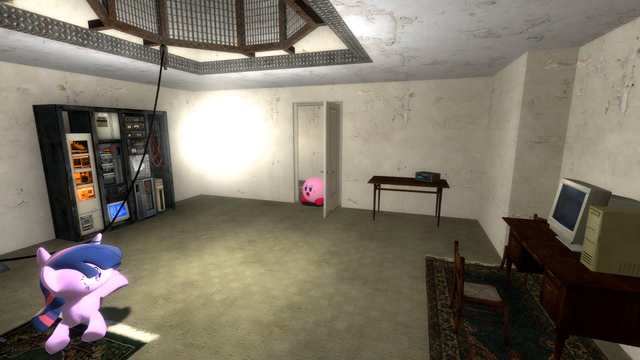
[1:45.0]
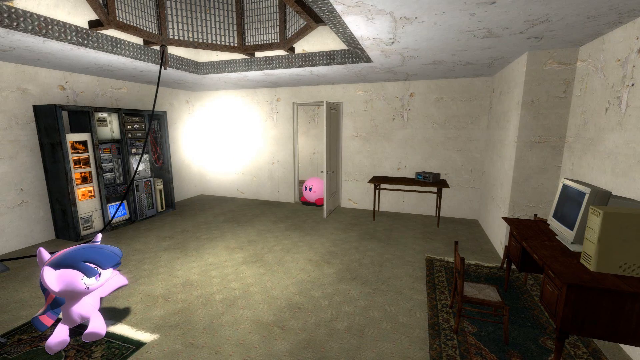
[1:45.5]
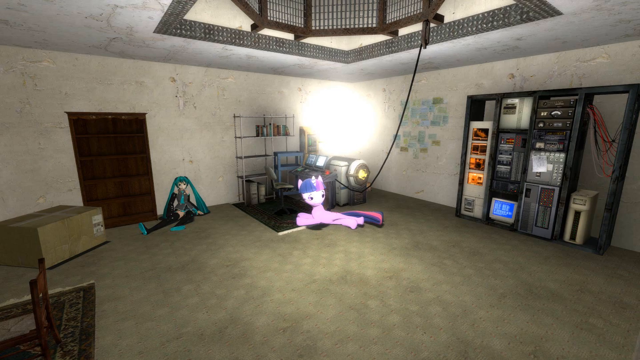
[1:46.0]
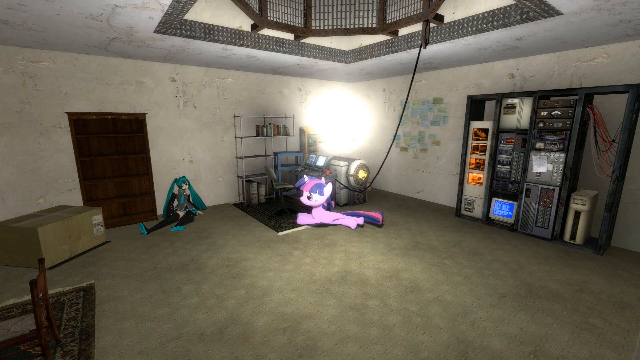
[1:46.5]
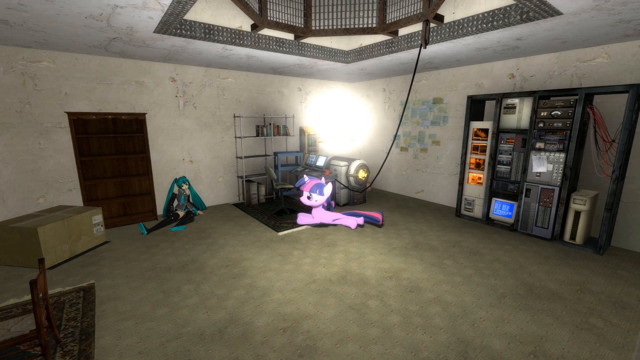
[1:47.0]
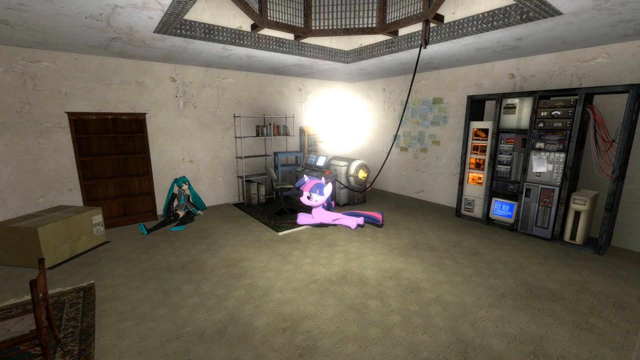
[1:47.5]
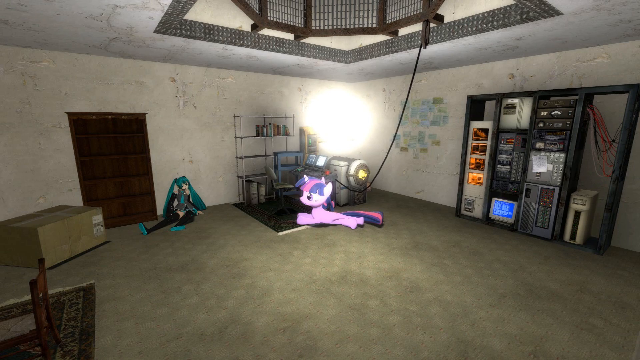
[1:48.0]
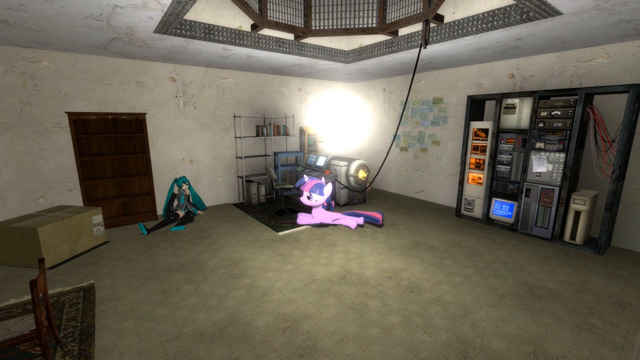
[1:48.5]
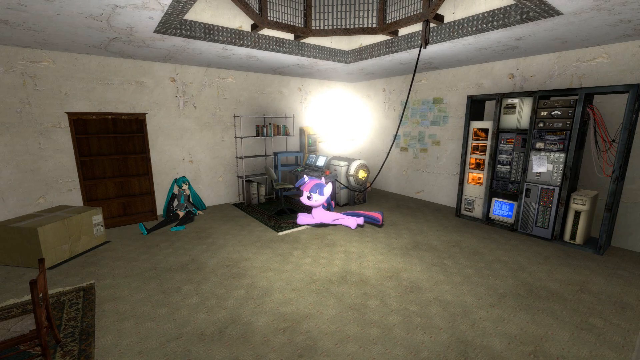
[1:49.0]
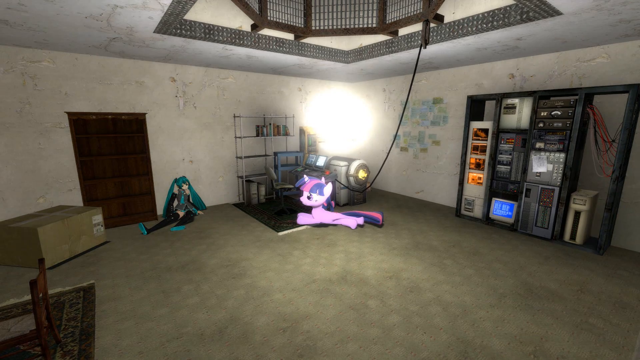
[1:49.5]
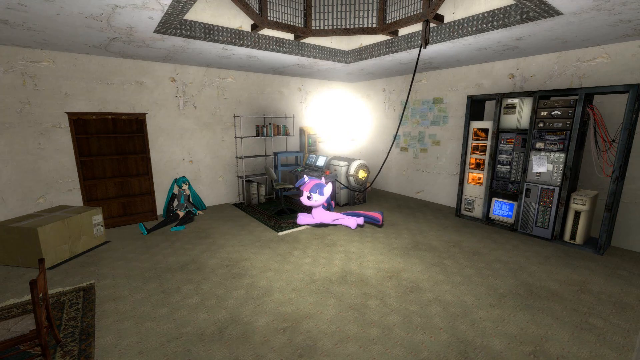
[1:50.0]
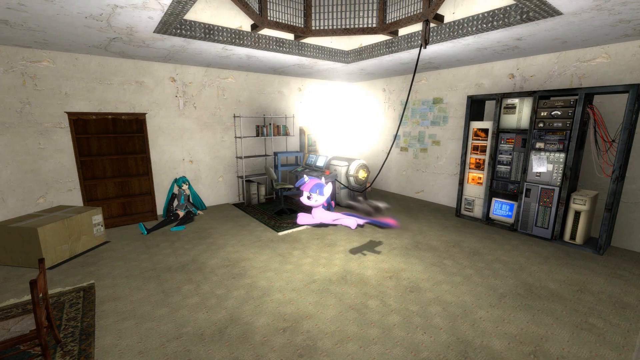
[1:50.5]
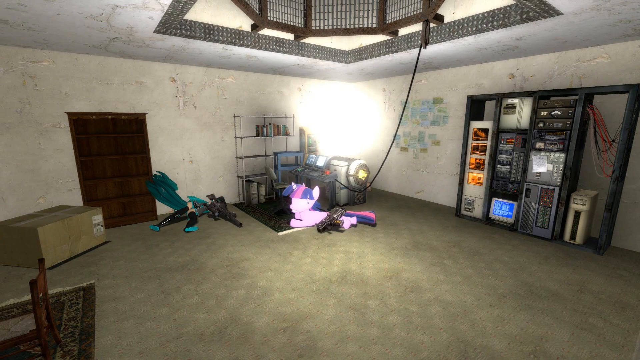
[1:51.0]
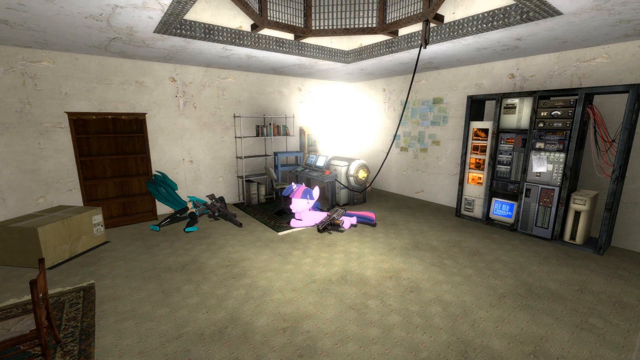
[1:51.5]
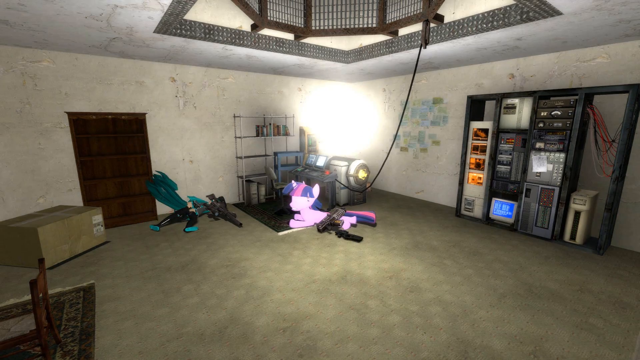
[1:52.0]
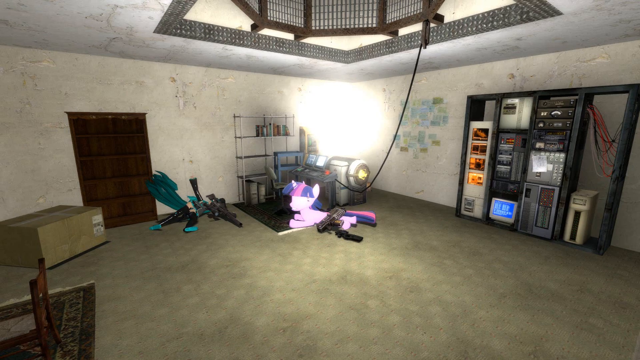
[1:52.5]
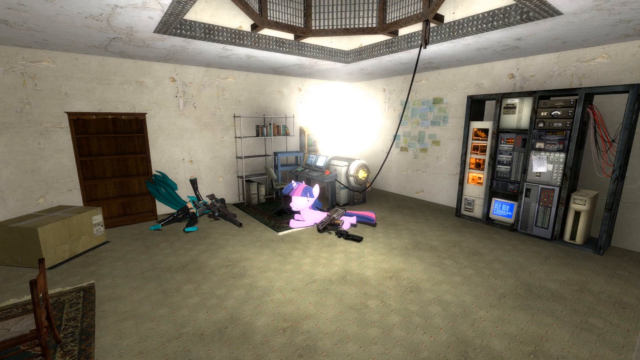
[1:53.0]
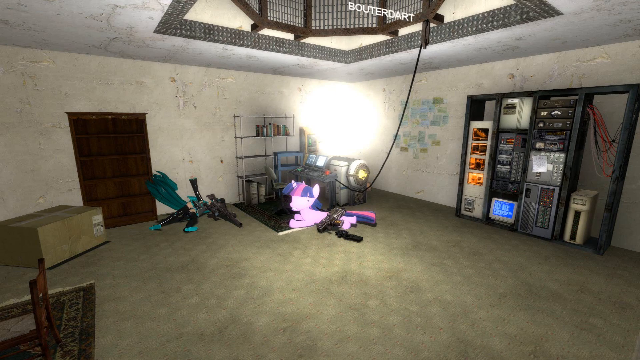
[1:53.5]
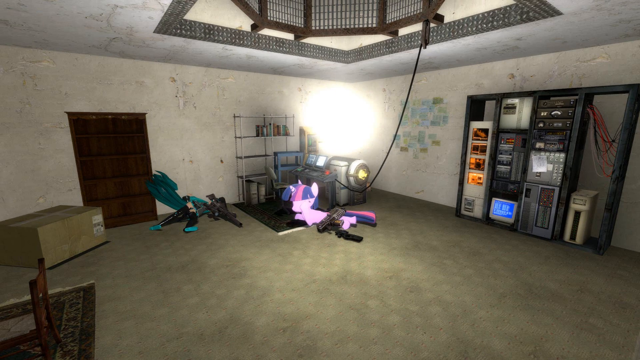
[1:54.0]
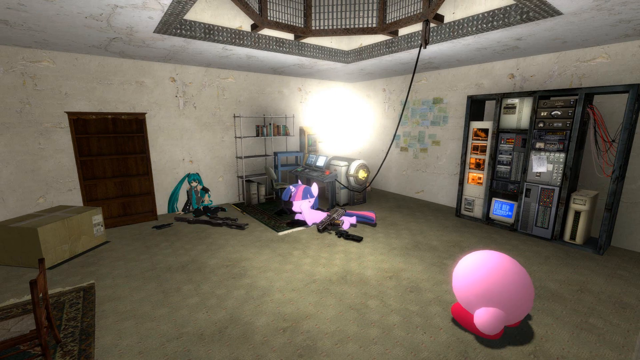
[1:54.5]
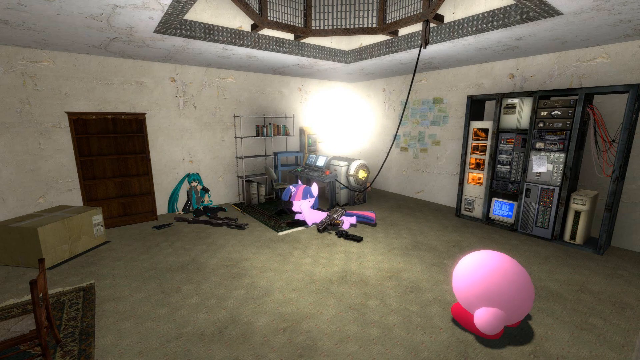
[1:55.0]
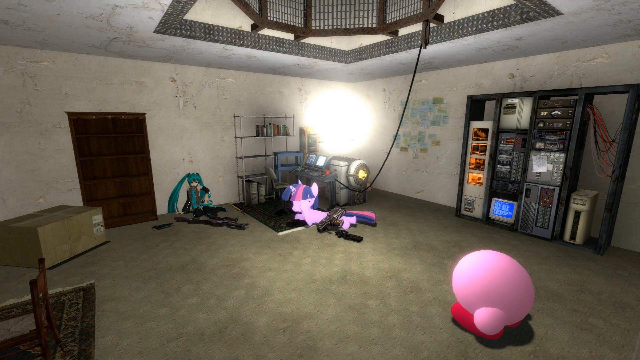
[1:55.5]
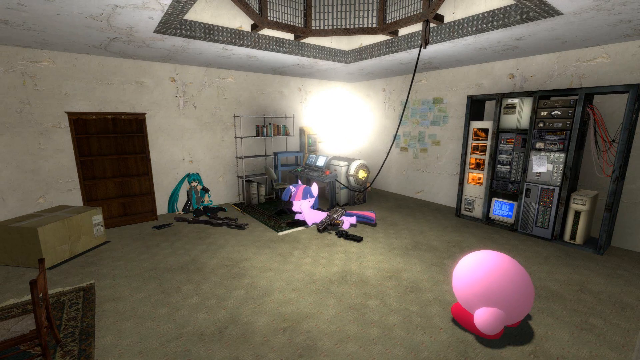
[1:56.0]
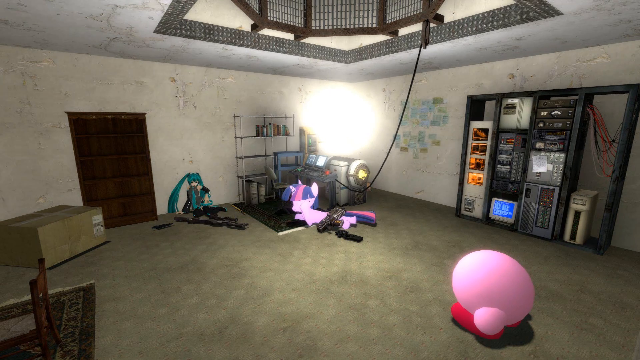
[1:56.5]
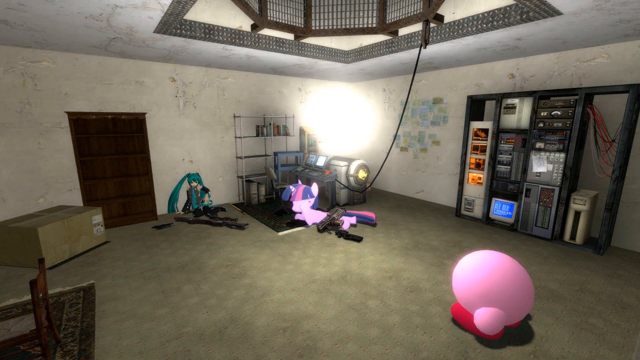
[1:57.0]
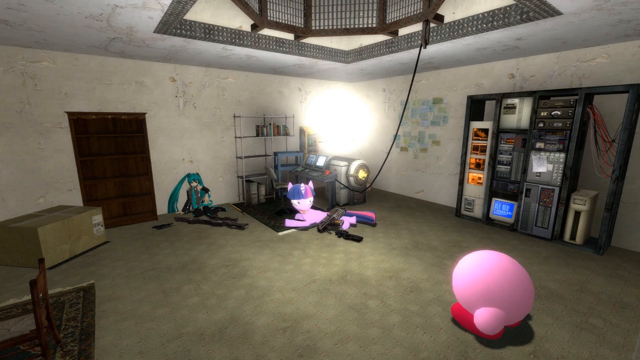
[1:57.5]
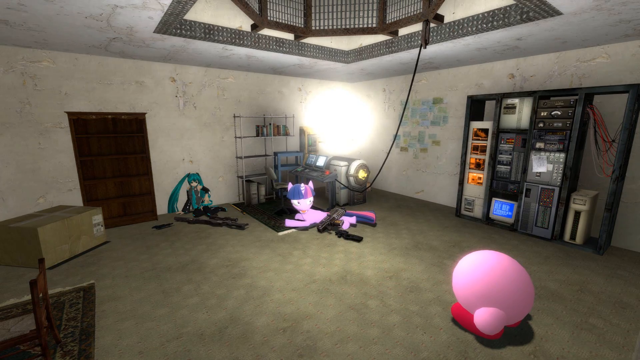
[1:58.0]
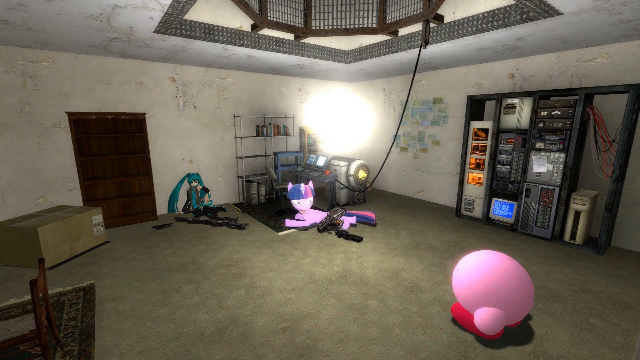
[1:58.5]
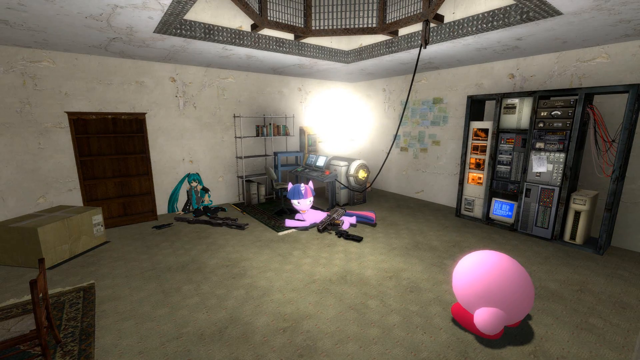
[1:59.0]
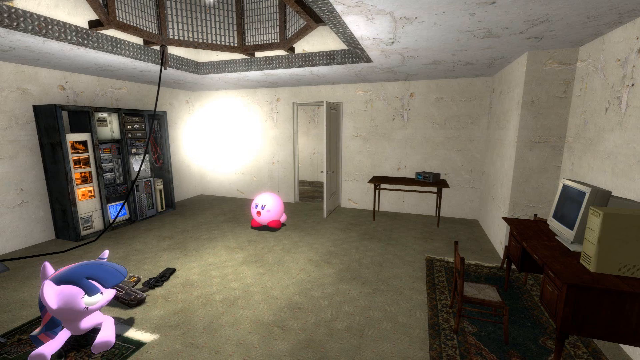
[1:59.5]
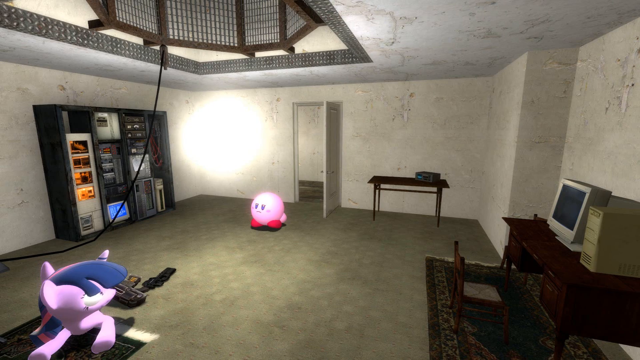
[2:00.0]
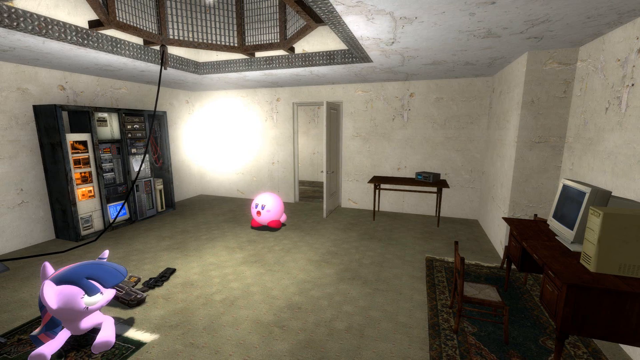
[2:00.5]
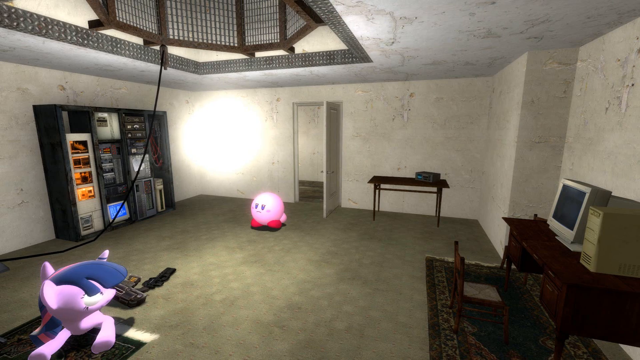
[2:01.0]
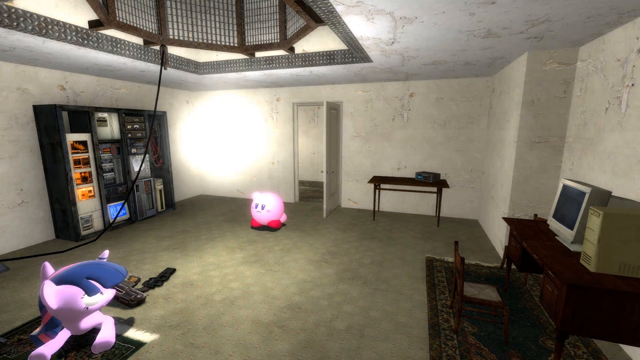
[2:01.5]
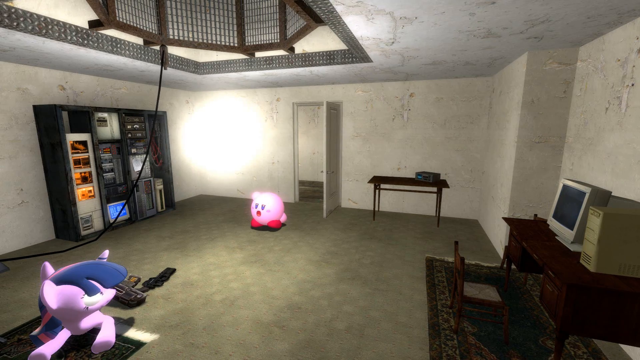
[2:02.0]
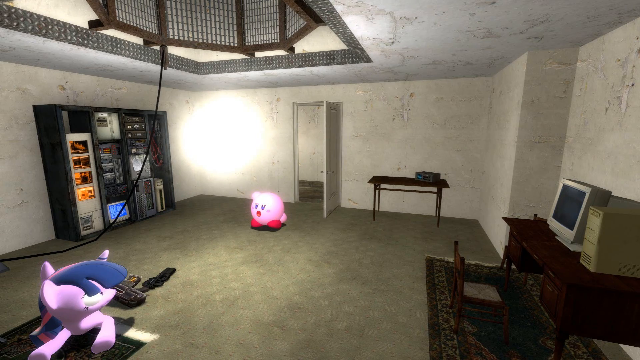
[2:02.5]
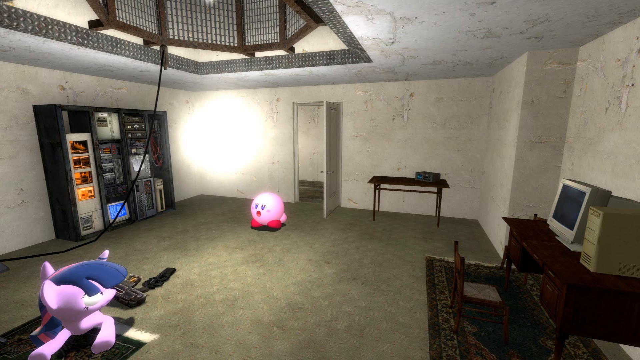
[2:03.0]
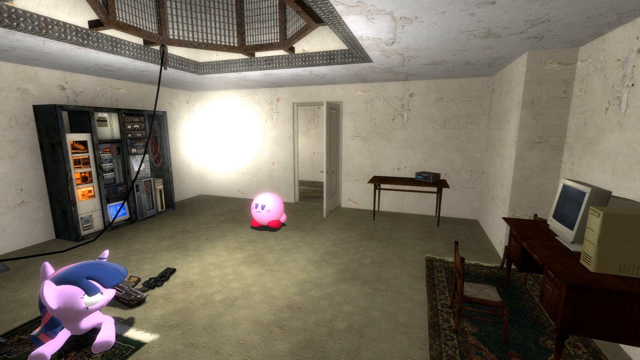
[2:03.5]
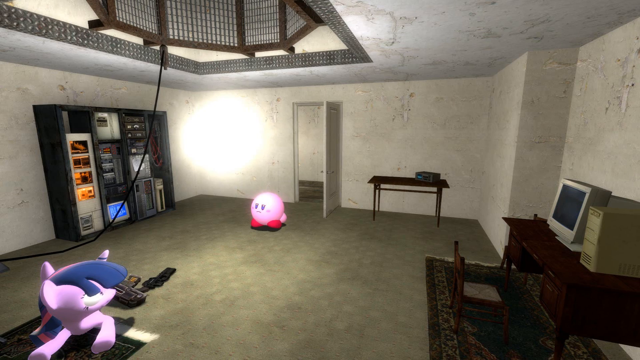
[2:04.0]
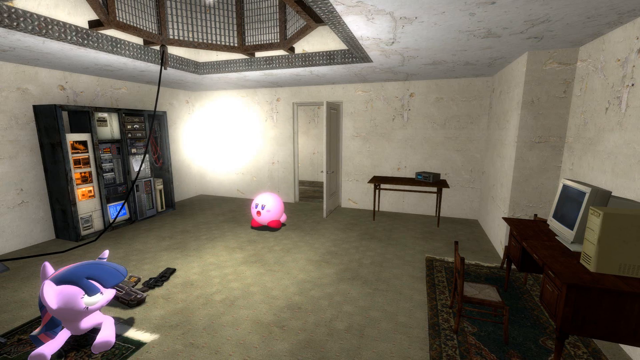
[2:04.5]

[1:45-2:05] The pink guy stands in the doorway, and the view then flashes to the princess and the horse. The box and the shelving units are visible. The princess has kind of moved up against the wall, though she is still sitting on the floor. The big fireball comes down again, in a different place in the room. The table, the computers, the shelving units and the rope from the ceiling are visible; what the rope is attached to is unclear. The pink guy is still talking in a panic-like state.